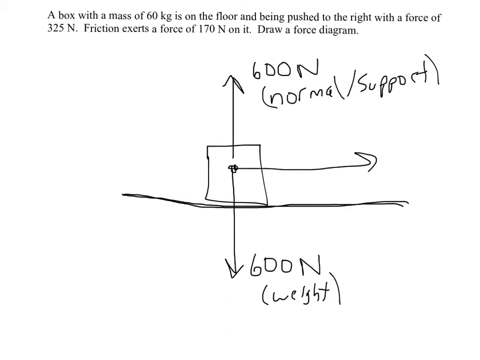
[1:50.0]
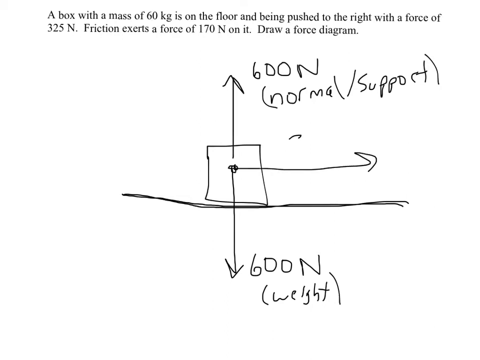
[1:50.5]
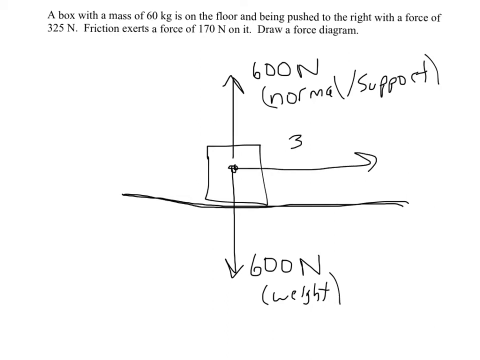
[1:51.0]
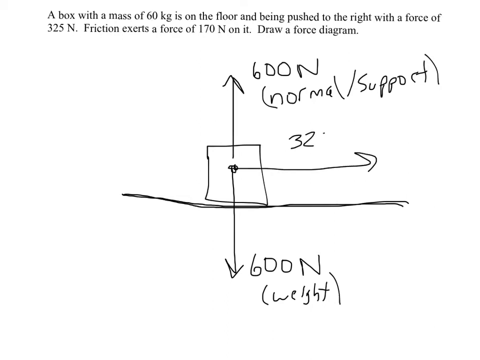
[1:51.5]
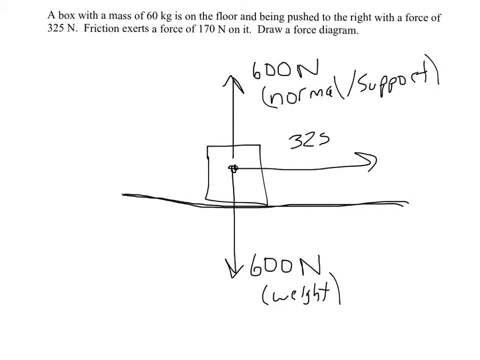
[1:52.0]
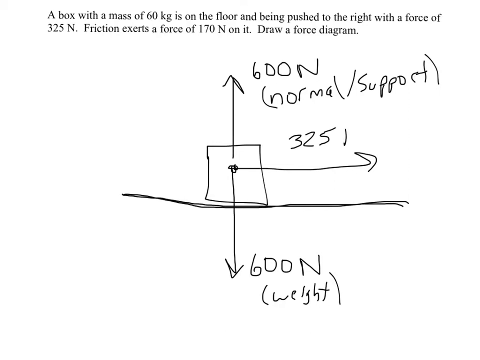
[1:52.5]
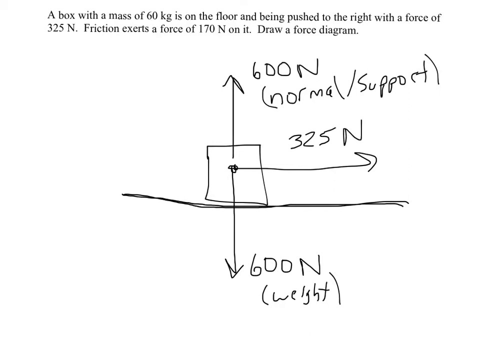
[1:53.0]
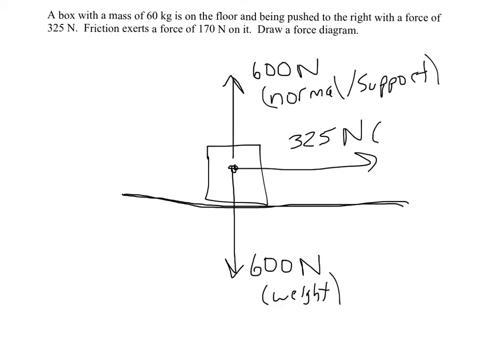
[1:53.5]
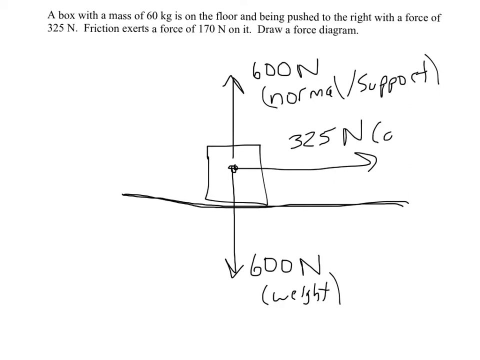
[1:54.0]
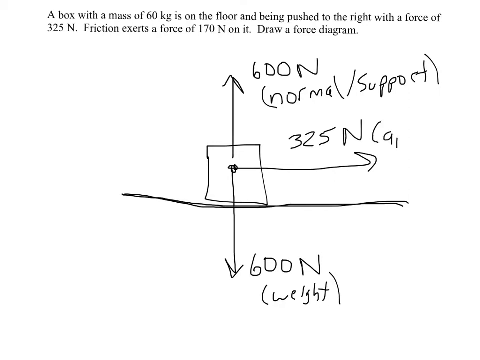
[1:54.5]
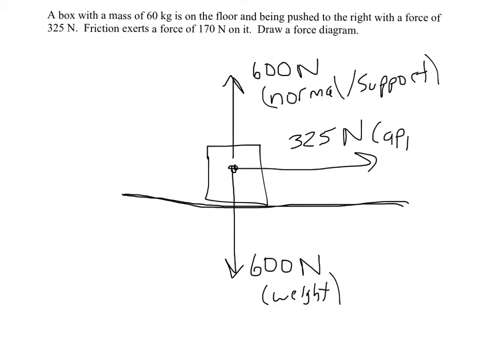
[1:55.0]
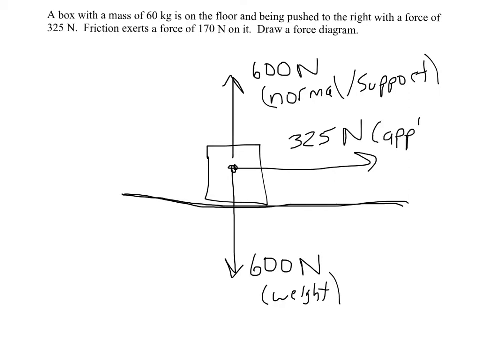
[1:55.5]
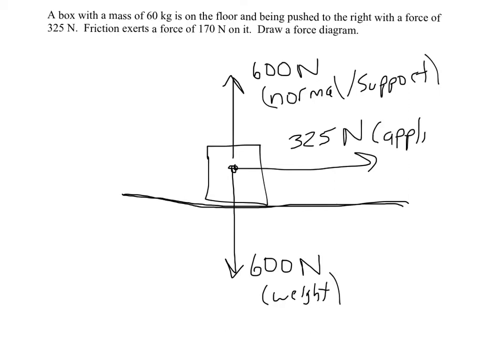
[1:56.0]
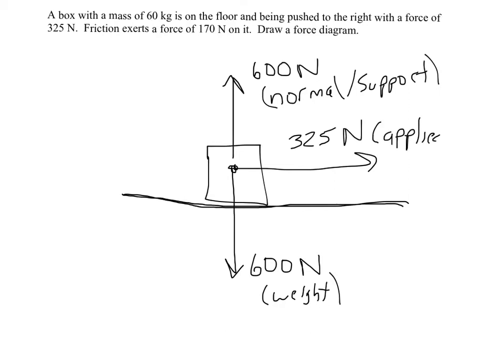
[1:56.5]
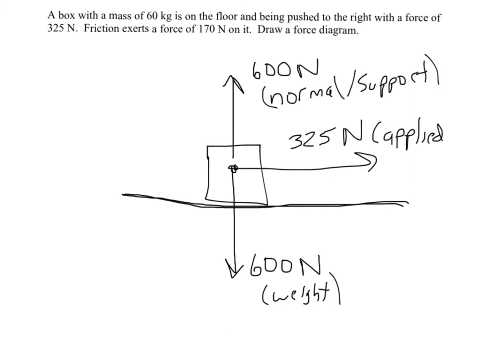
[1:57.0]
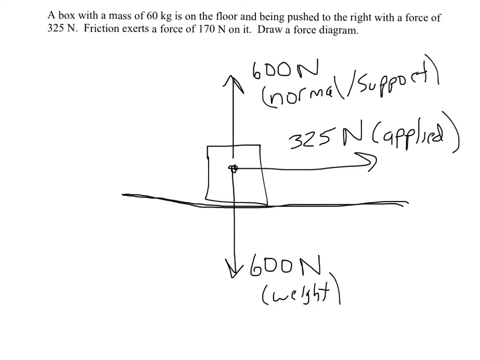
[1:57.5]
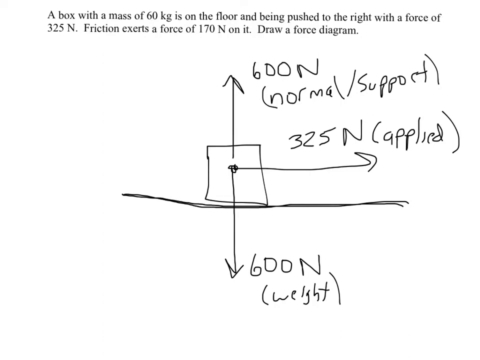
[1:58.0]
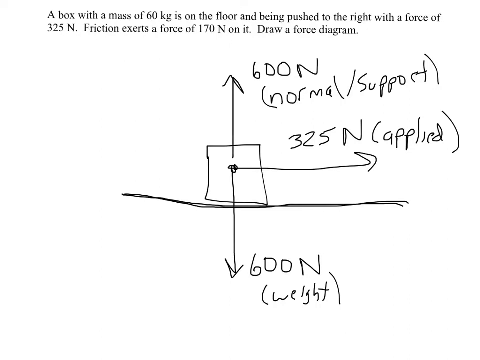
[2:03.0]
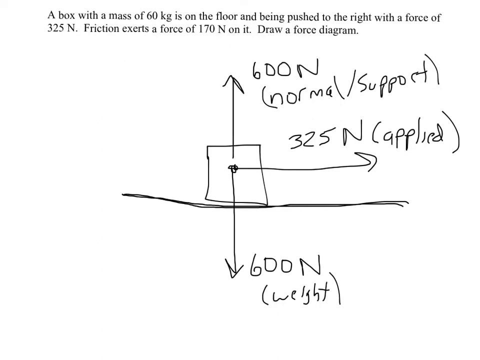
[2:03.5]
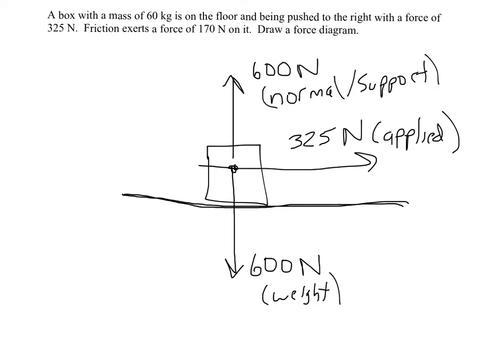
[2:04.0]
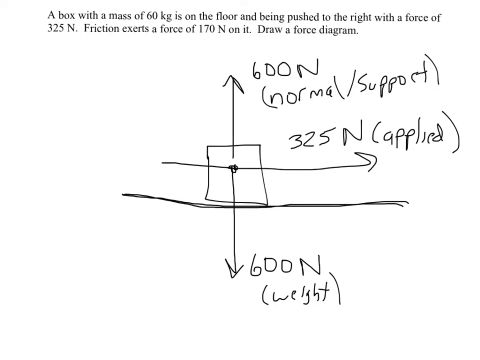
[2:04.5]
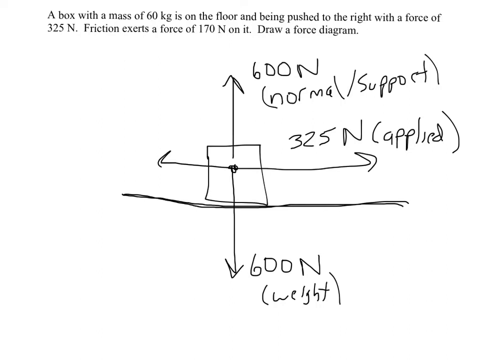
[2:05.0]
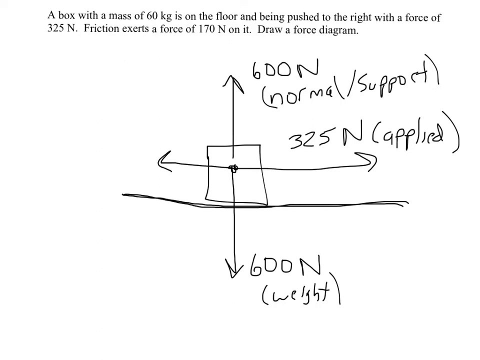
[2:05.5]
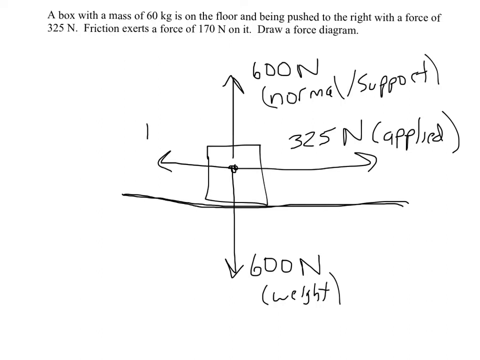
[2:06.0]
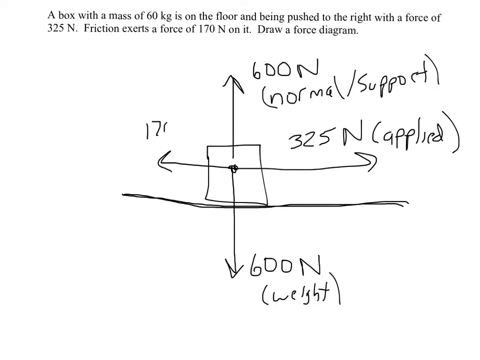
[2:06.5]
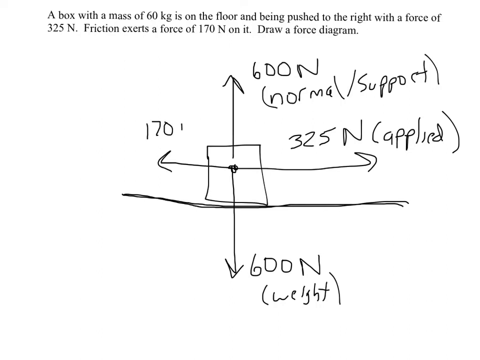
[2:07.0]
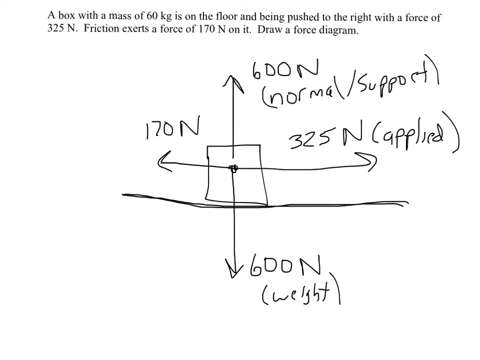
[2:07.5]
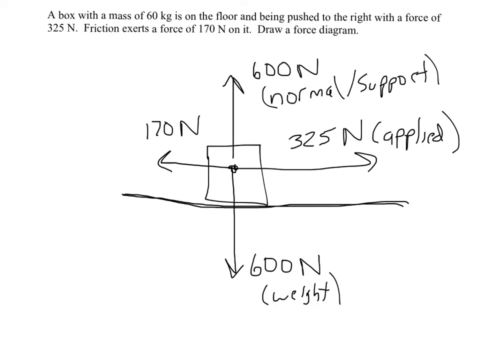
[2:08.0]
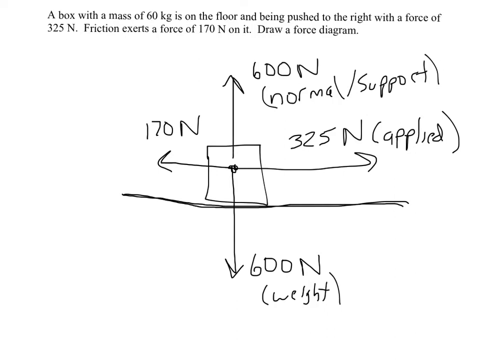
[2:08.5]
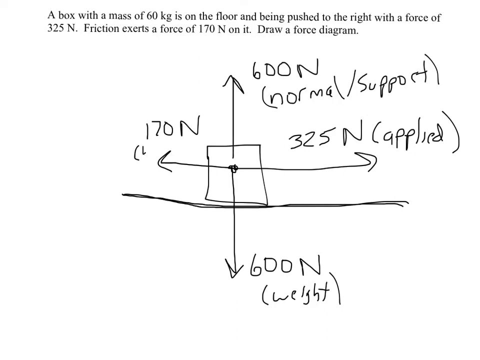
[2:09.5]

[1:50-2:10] With the upward and downward forces already drawn on the rectangular sketch, the person labels the arrow pointing to the right with a force of "325 Newtons" and writes the word "applied" in brackets. The person then draws another arrow pointing to the left, labels it with a force of "170 Newtons", and starts writing something in brackets beside it.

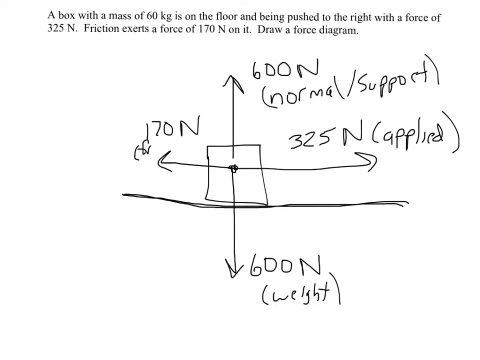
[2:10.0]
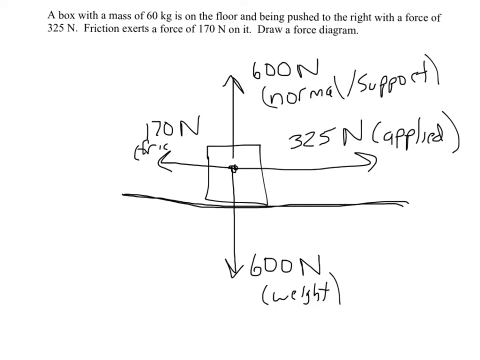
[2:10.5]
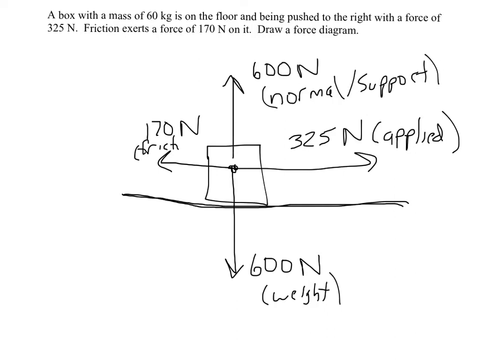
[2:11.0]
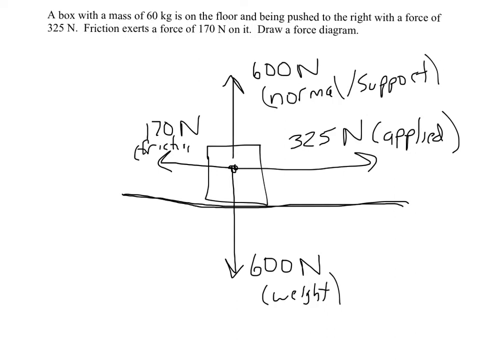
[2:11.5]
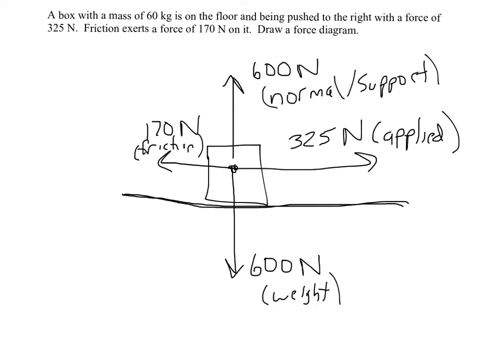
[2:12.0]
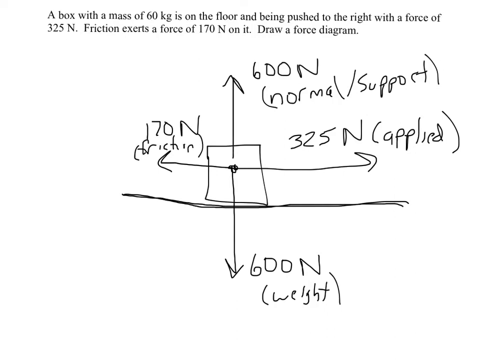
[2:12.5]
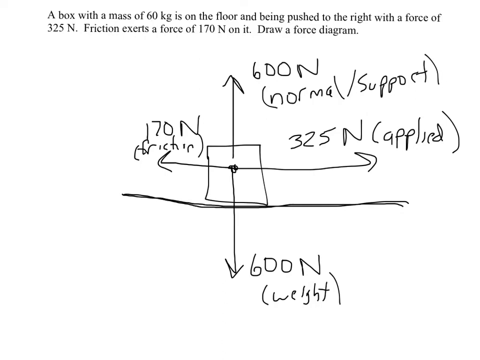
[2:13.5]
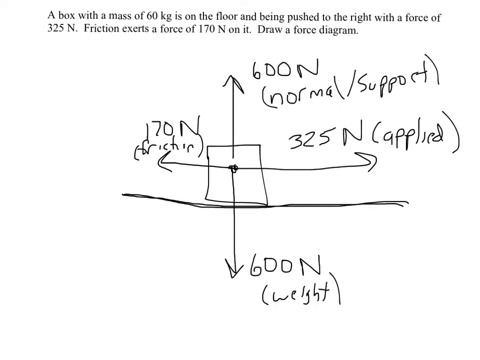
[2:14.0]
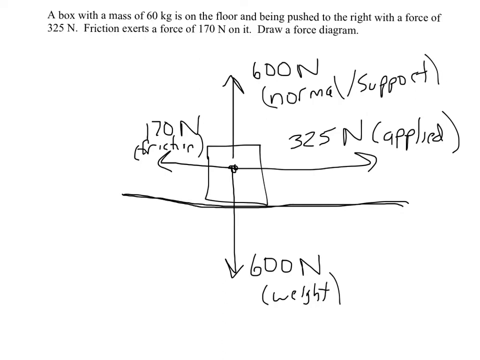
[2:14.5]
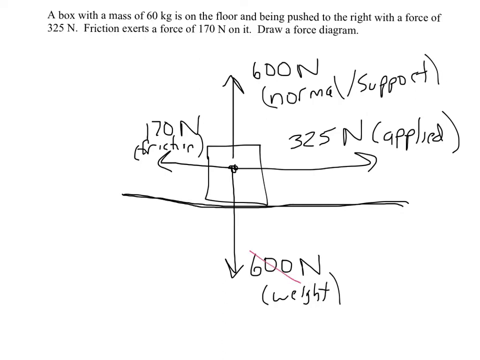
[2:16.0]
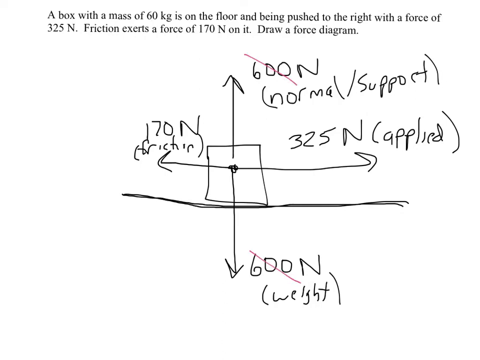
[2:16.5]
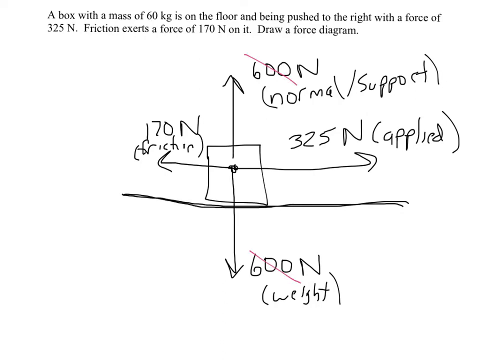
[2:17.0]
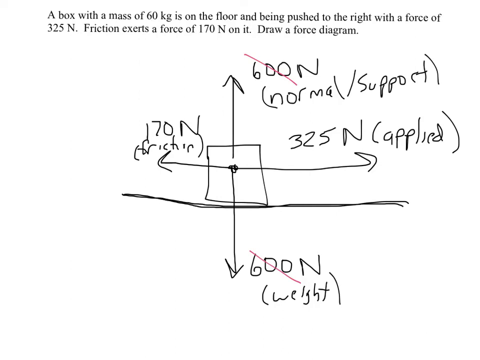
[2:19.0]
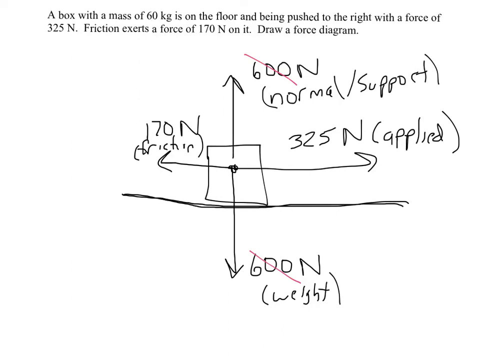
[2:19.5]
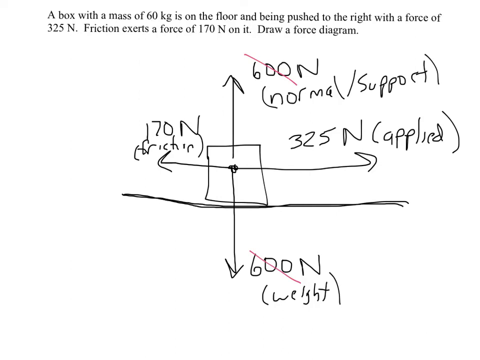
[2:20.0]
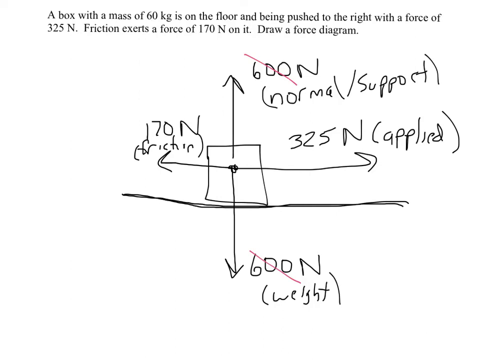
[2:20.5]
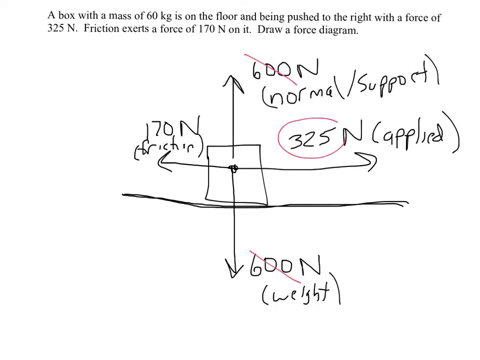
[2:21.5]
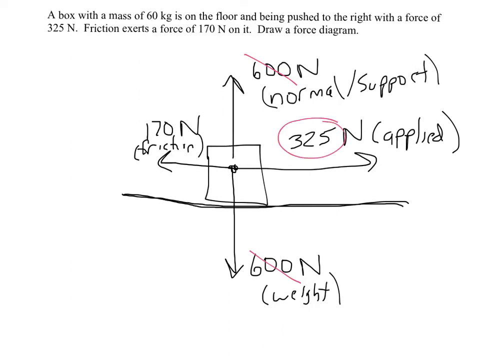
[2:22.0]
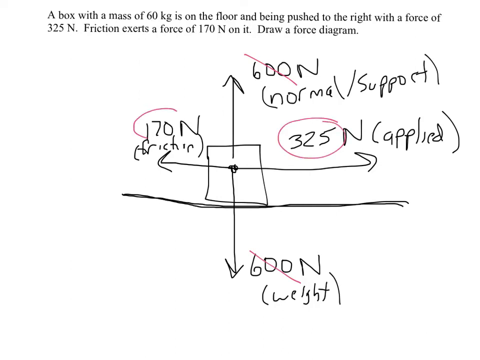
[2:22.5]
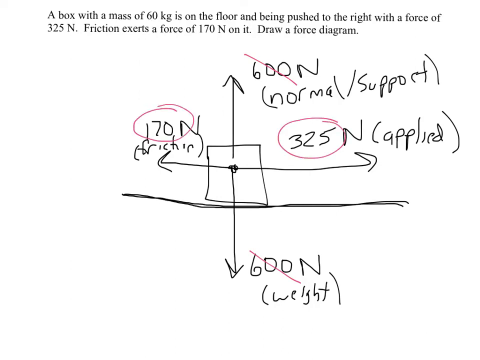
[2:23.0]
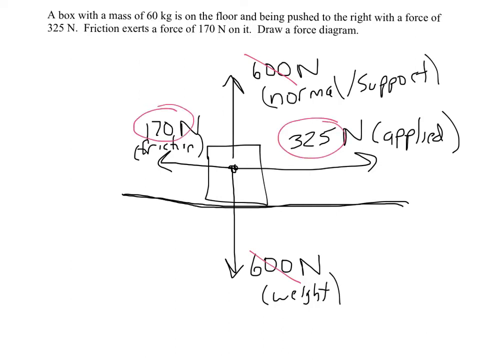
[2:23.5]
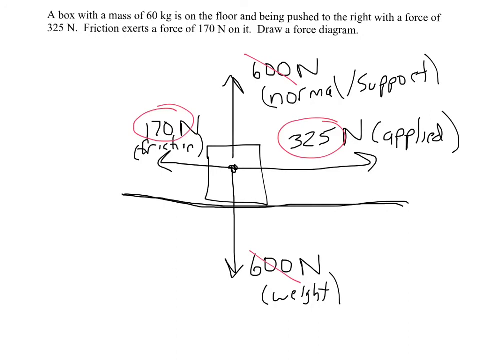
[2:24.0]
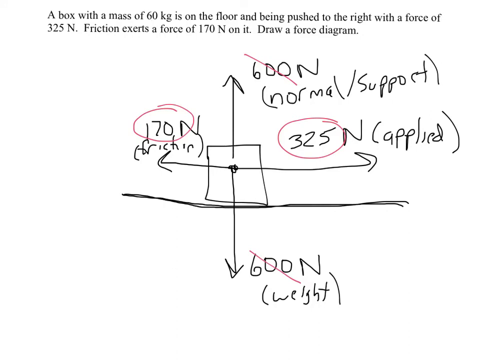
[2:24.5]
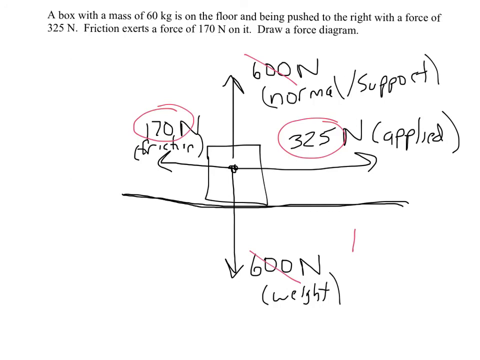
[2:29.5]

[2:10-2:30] On the arrow pointing to the left, labeled 170N, the word "friction" is written in brackets. Using red ink, the person circles 325N and 170N. The person then cancels the 600 N upward force and the 600 N downward force.